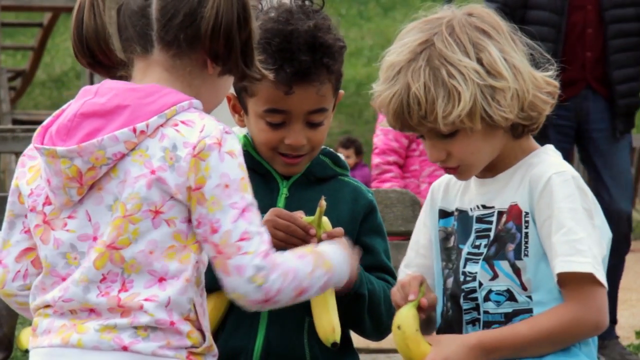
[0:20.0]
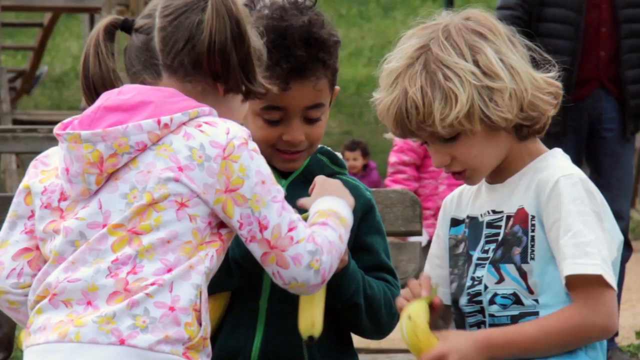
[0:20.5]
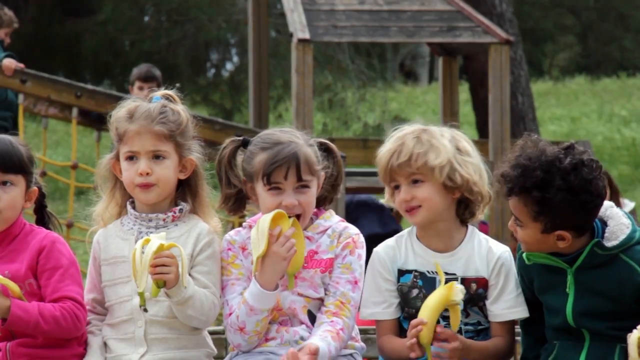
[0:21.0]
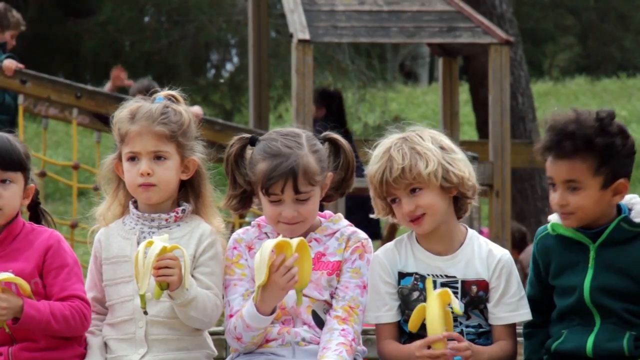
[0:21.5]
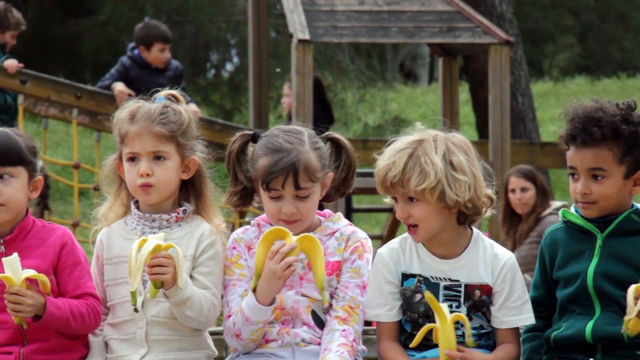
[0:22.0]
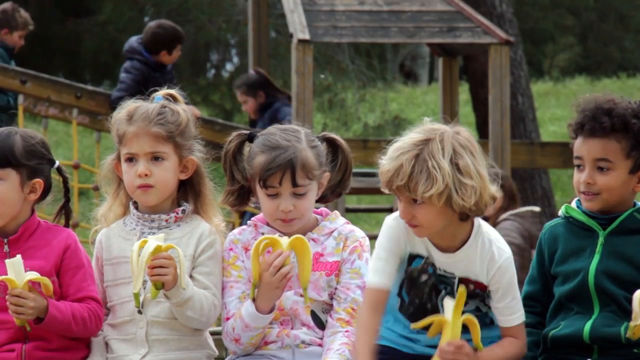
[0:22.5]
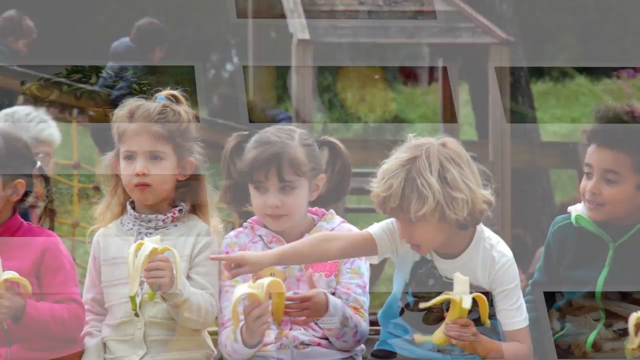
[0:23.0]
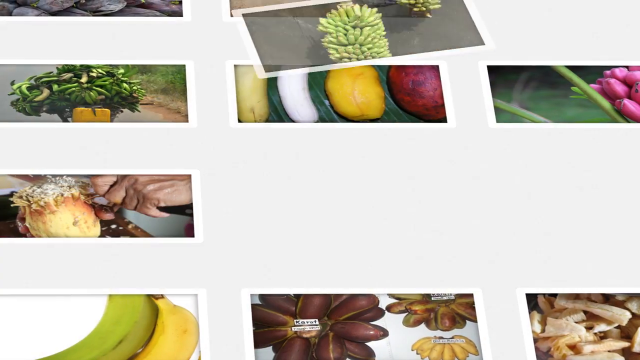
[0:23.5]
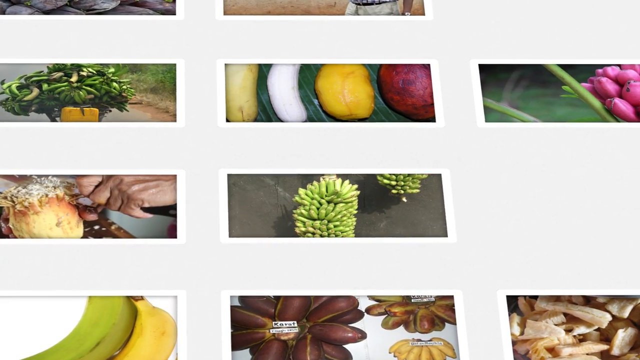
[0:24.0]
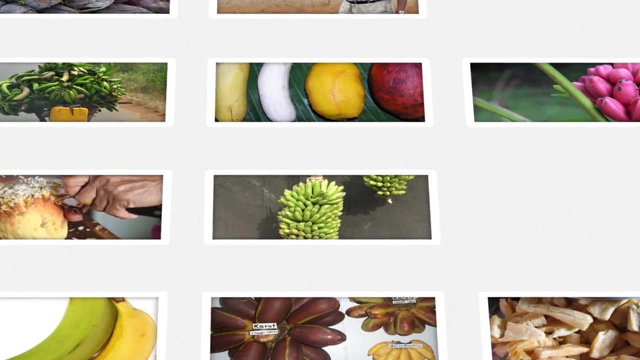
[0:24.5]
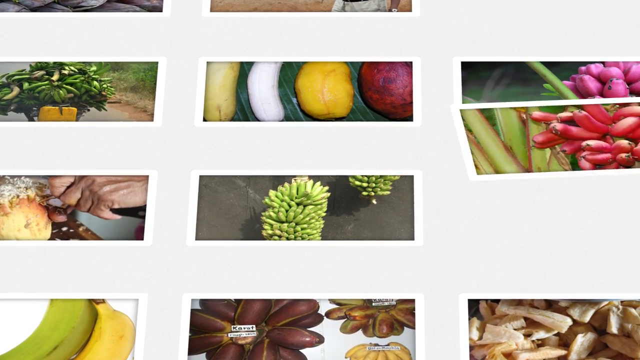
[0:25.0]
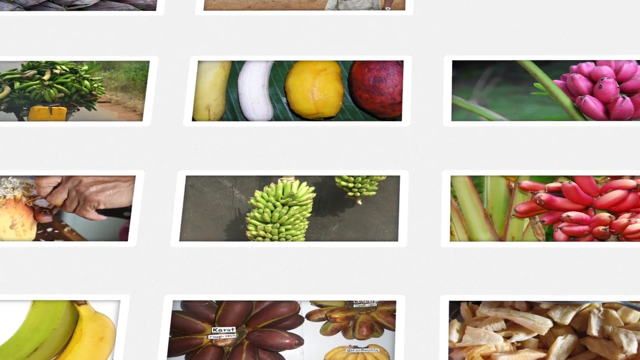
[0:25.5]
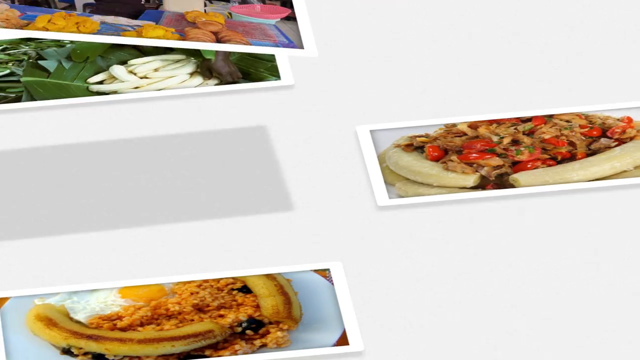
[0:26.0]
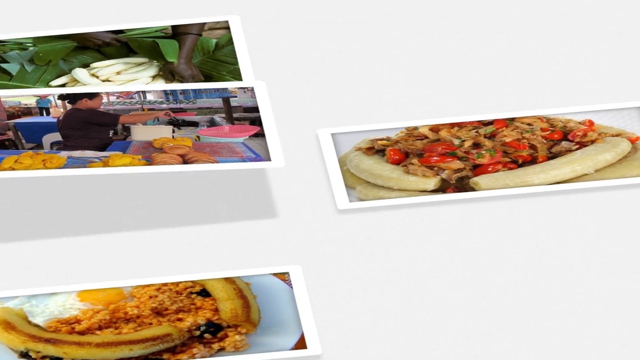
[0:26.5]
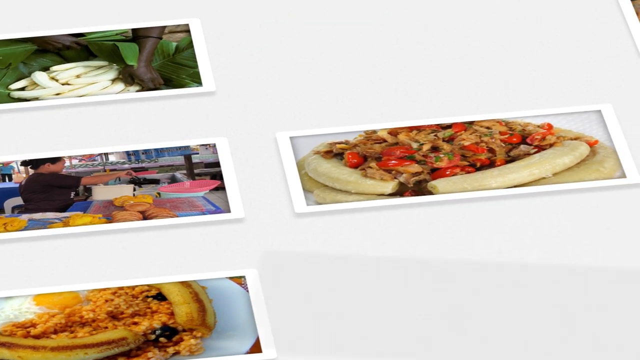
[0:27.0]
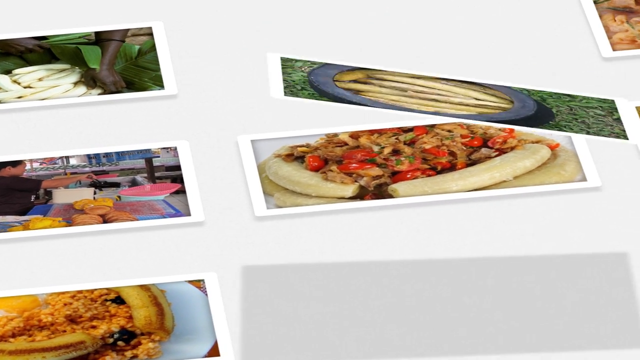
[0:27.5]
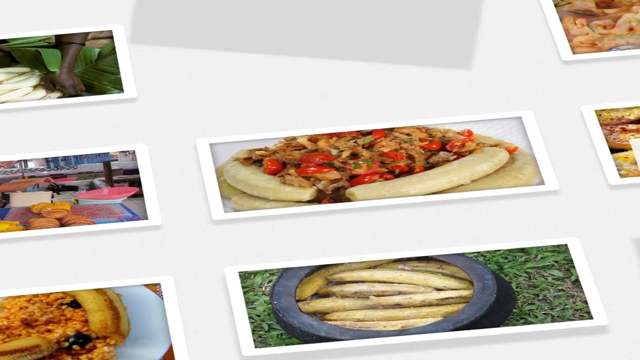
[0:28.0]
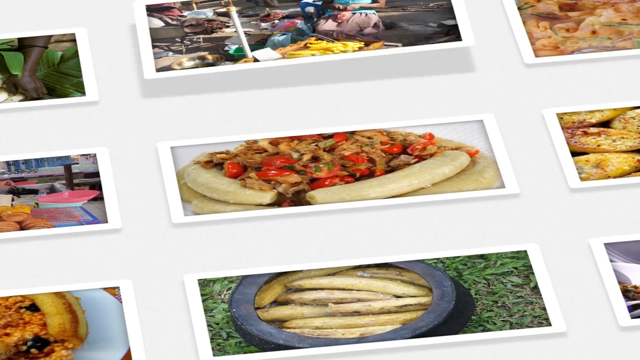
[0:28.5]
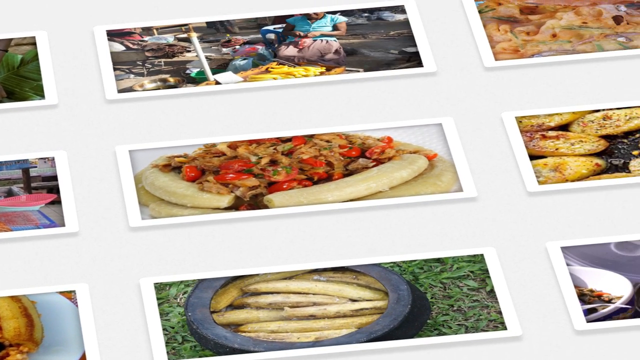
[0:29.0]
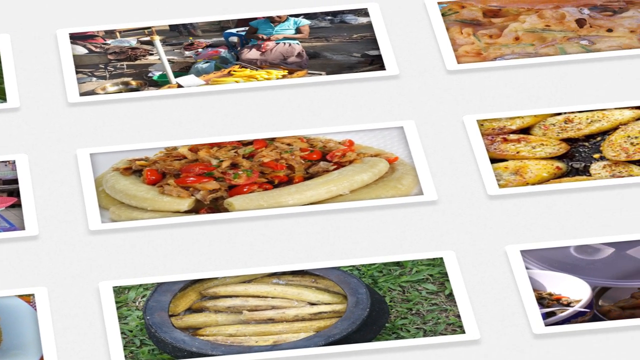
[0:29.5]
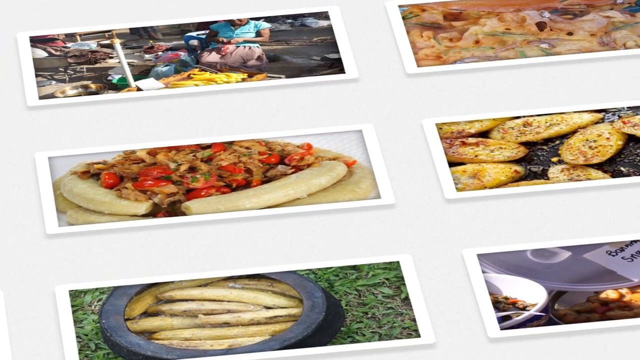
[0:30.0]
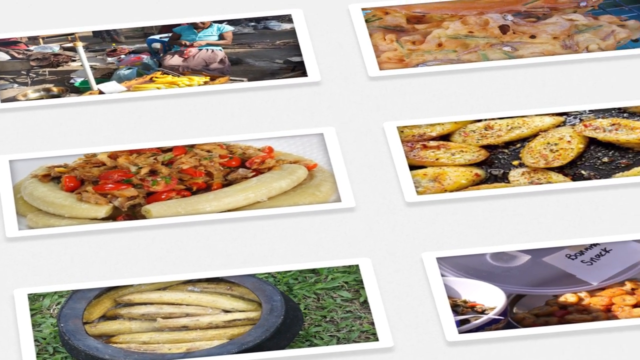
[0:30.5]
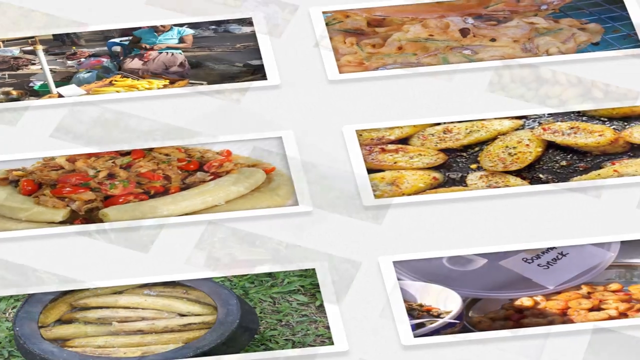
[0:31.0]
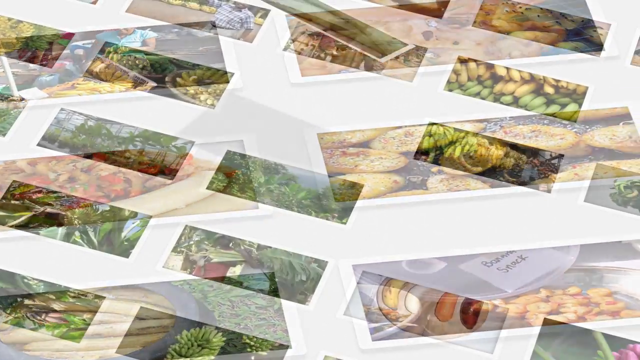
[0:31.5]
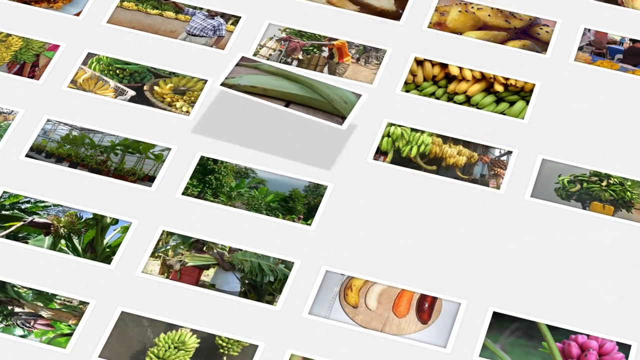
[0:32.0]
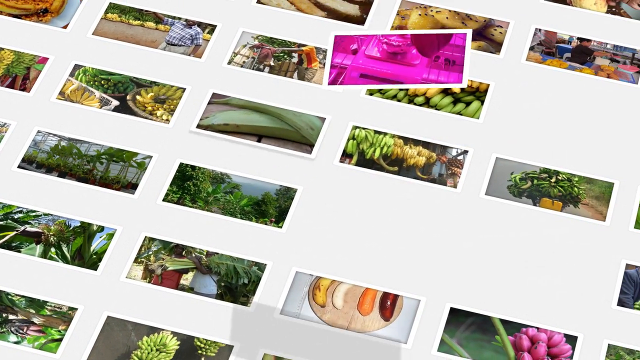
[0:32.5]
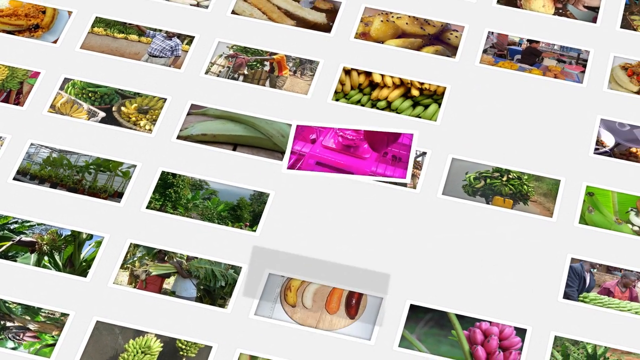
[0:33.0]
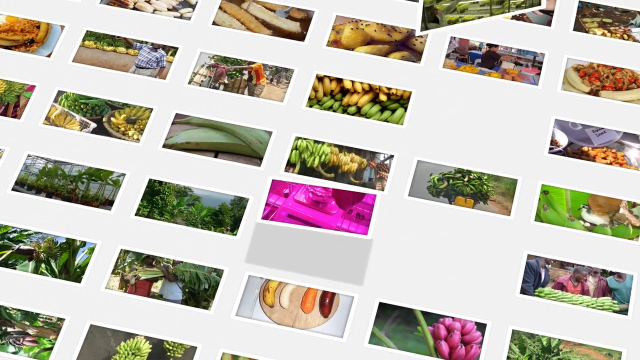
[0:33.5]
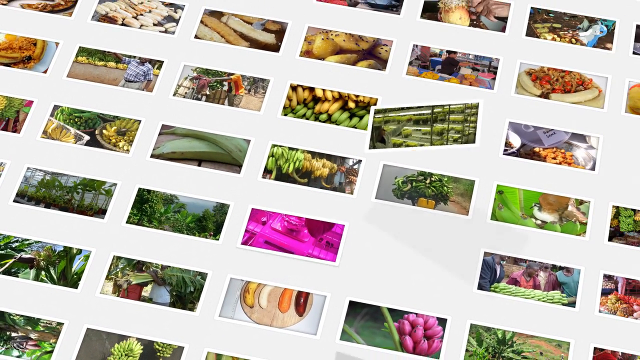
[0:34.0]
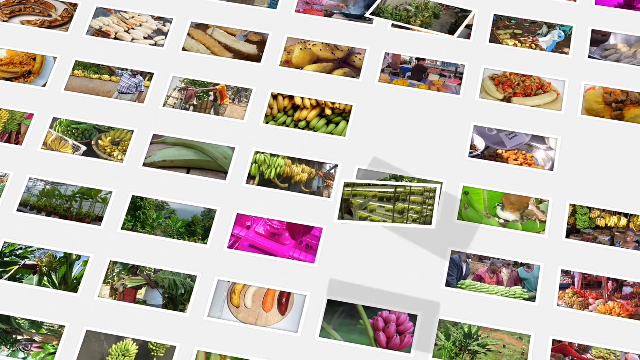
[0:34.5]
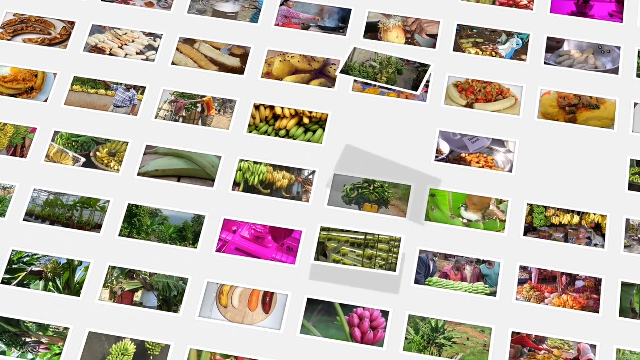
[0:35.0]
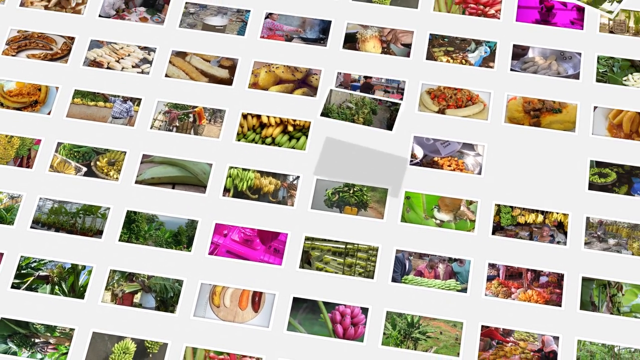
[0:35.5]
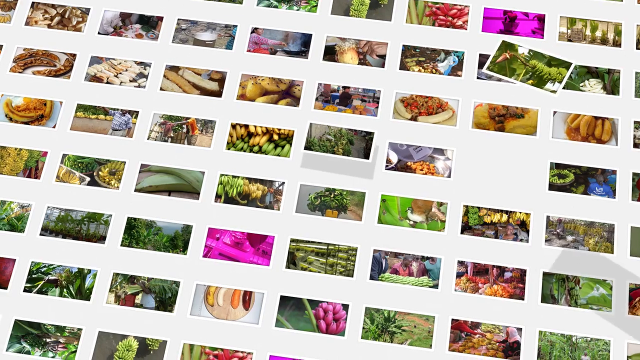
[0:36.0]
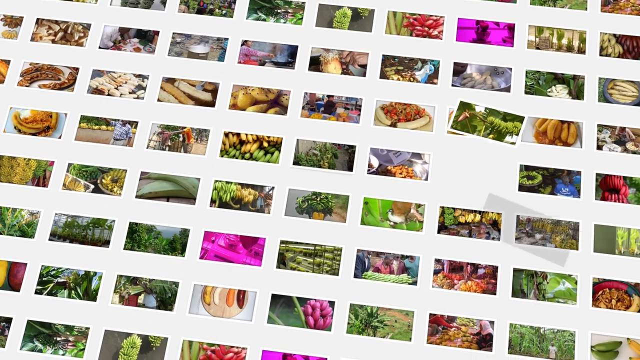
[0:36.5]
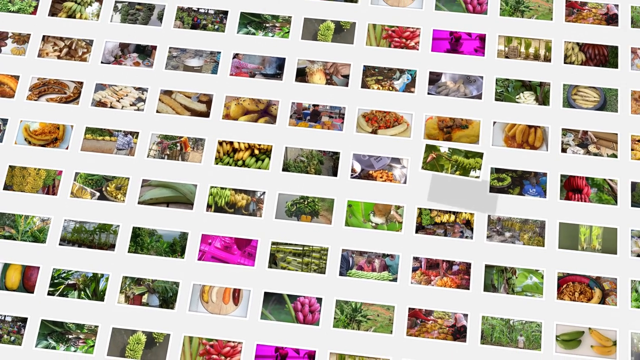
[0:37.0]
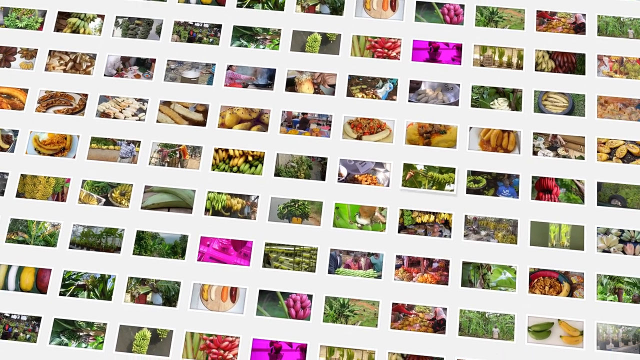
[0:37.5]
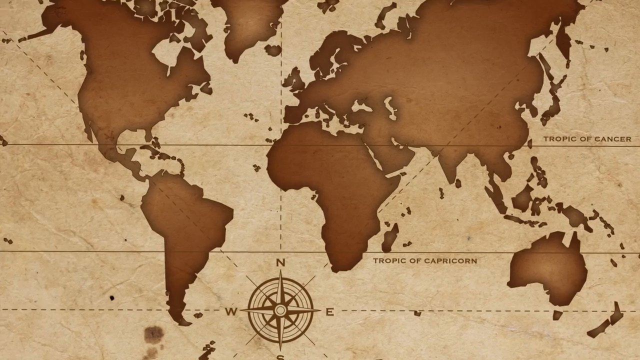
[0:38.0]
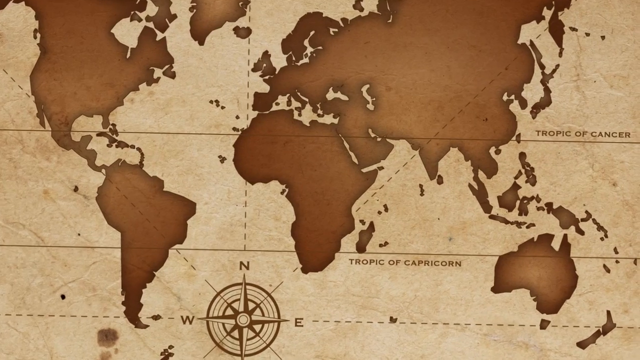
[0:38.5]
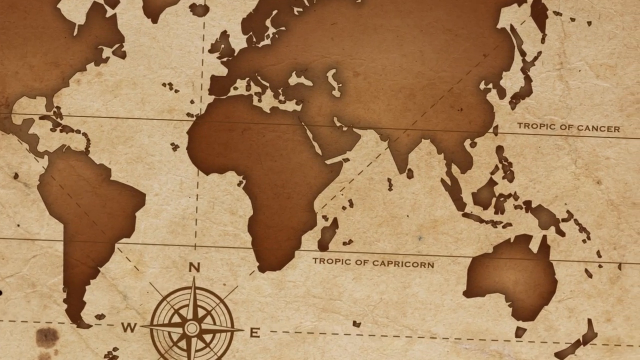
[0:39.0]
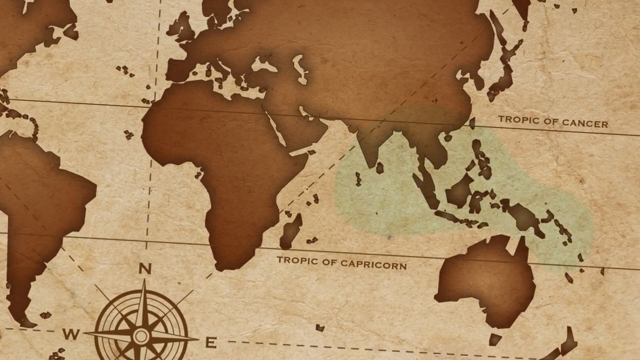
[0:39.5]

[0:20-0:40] The same three children are still with their bananas, now lined up with some other children. They appear to be on a playground, with other children running around in the background. The video cuts to a white piece of paper with different photographs being dropped onto it; the photographs show various types of food, apparently some kind of pizza and some kind of fish, though this is uncertain. The view keeps zooming out as more photographs drop onto the white background, and then they line up. Finally the view begins zooming in on a map that appears to show the area between the Tropic of Cancer and the Tropic of Capricorn.